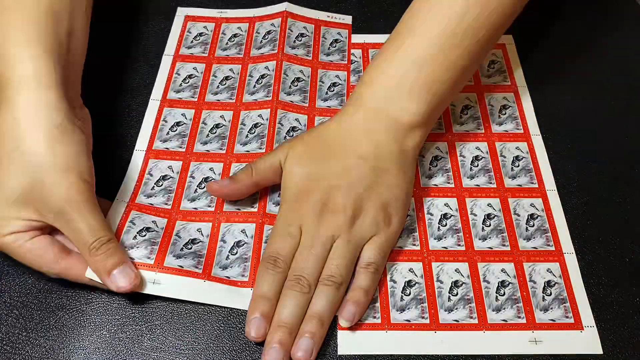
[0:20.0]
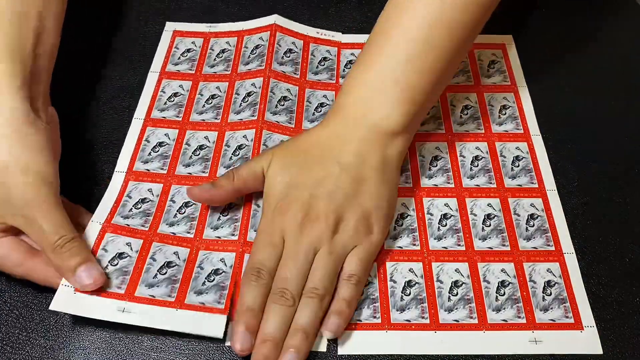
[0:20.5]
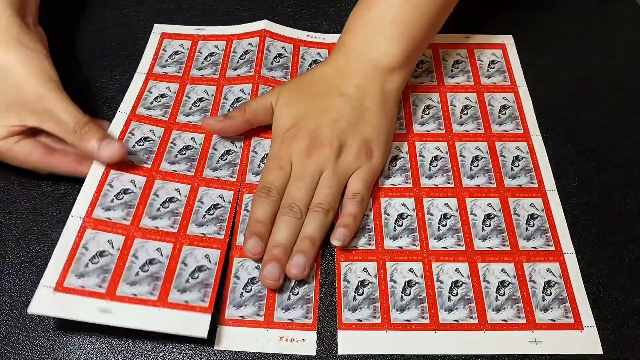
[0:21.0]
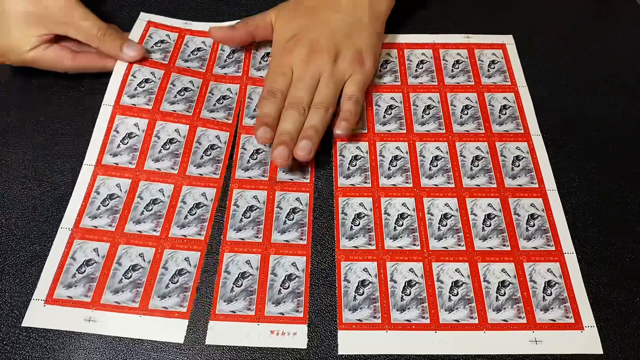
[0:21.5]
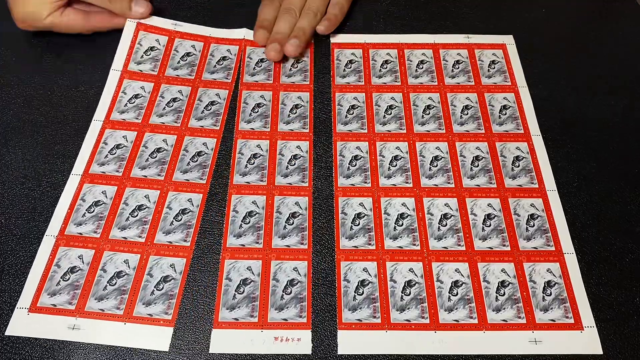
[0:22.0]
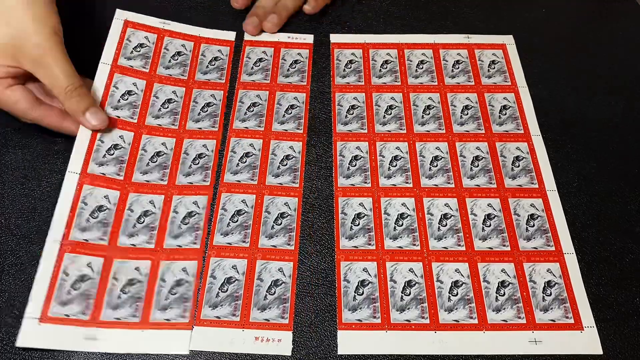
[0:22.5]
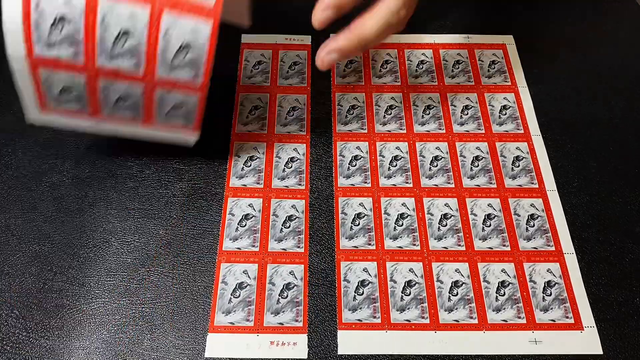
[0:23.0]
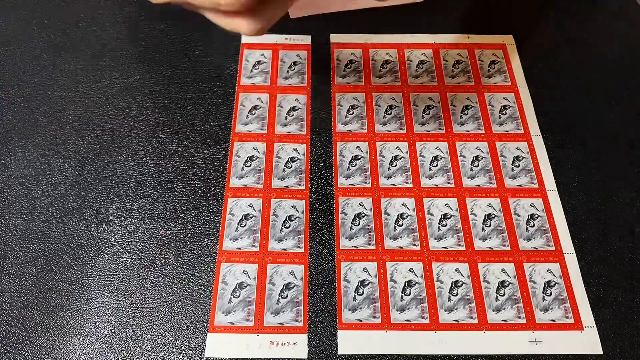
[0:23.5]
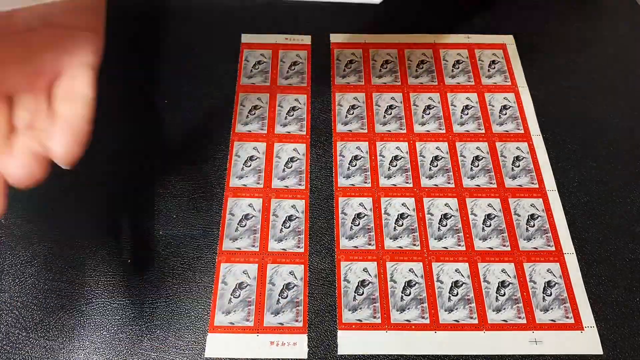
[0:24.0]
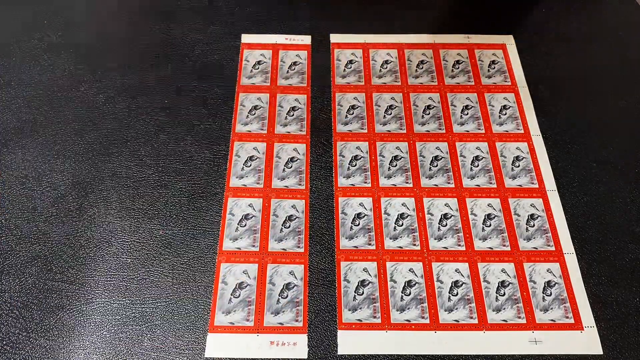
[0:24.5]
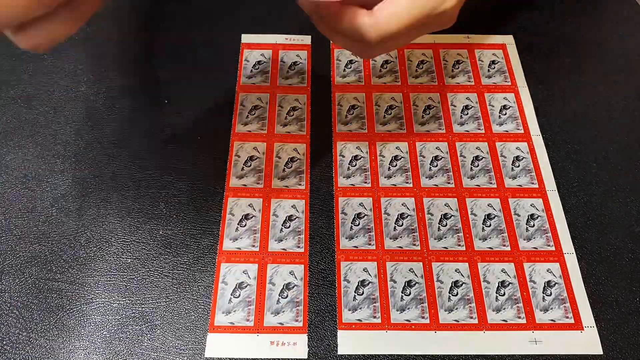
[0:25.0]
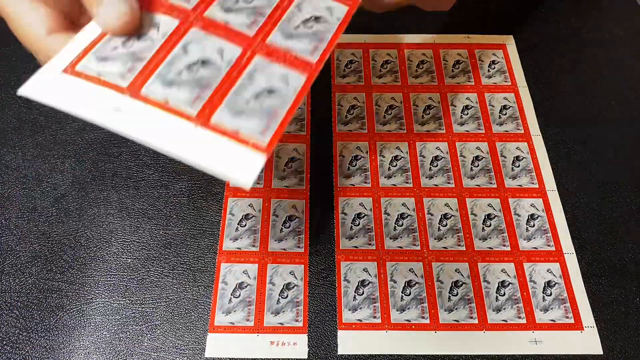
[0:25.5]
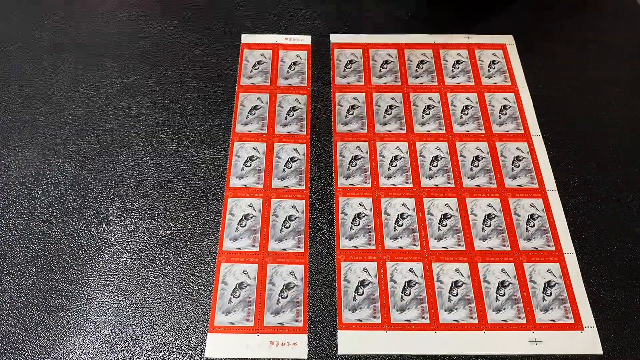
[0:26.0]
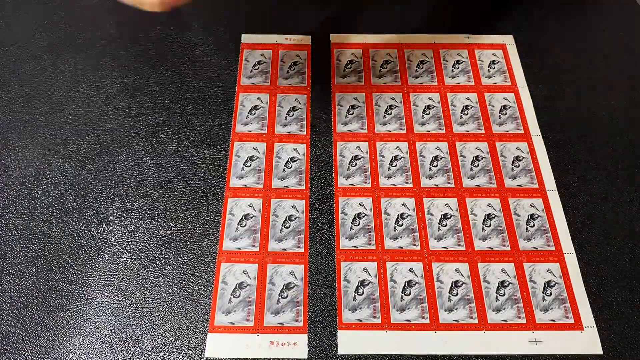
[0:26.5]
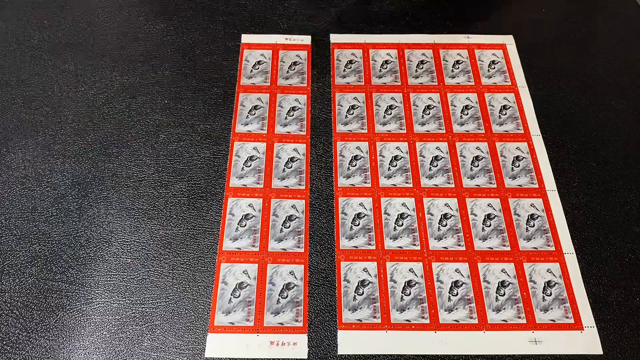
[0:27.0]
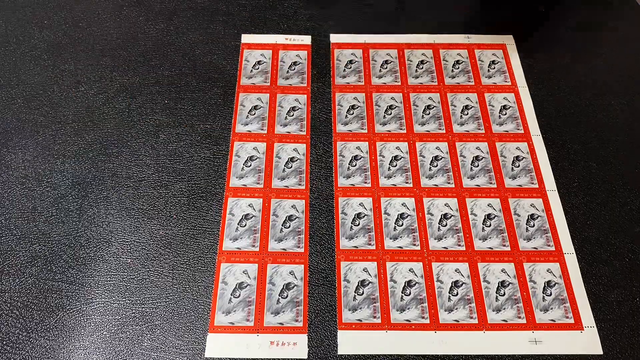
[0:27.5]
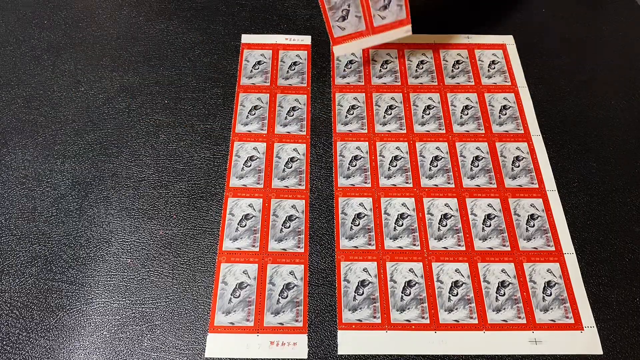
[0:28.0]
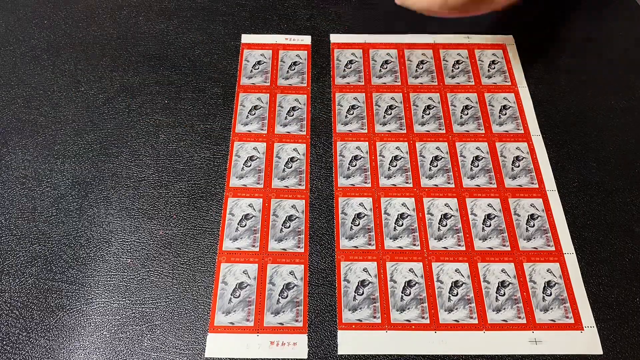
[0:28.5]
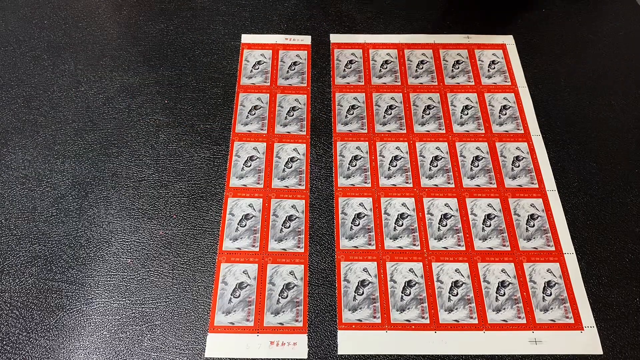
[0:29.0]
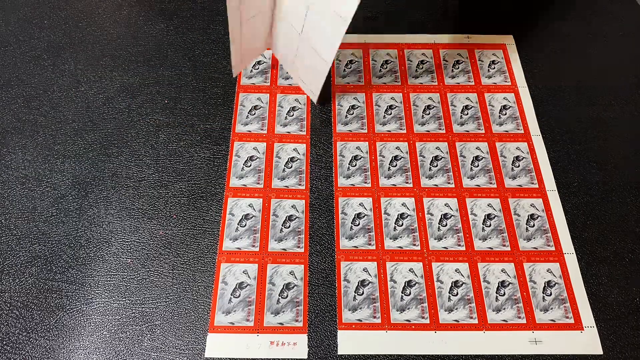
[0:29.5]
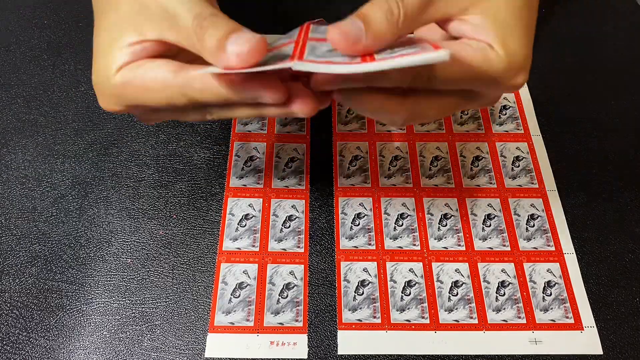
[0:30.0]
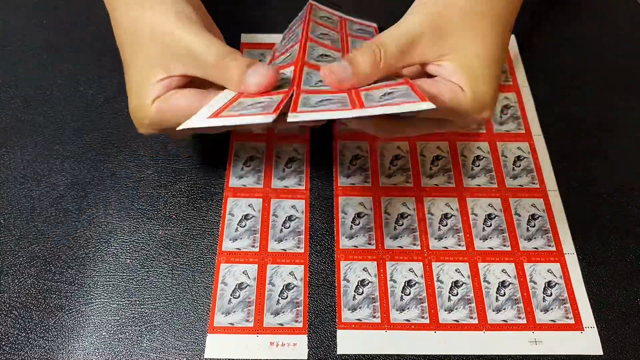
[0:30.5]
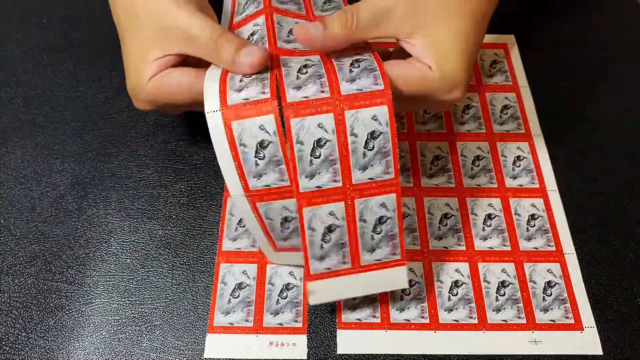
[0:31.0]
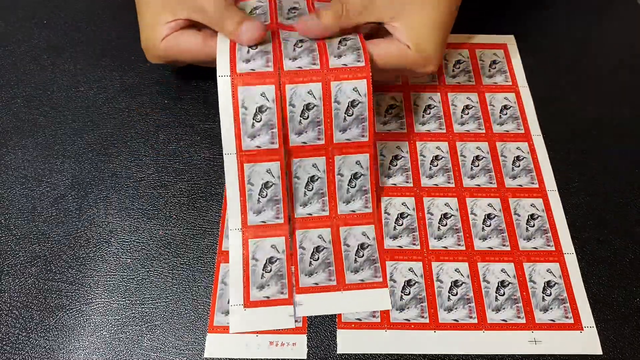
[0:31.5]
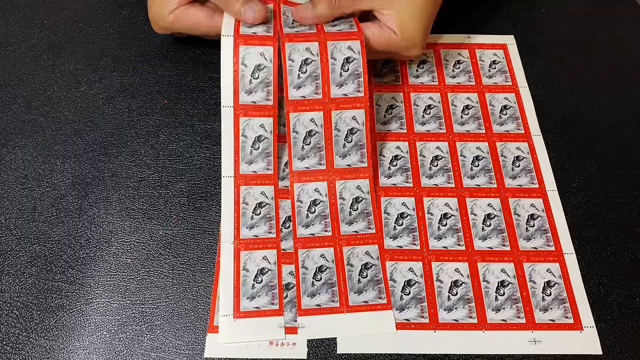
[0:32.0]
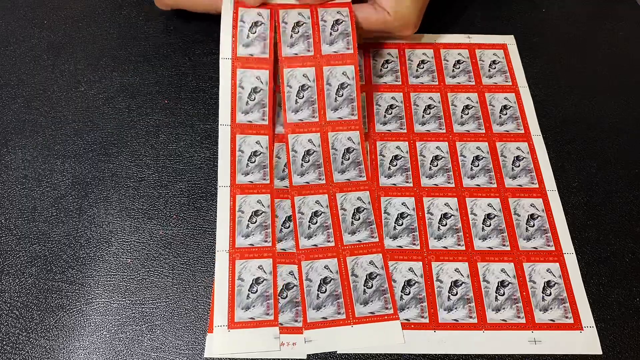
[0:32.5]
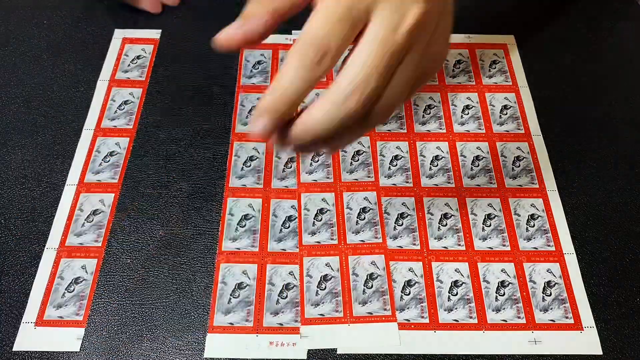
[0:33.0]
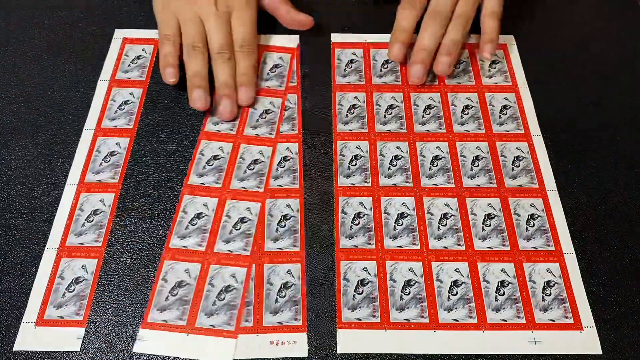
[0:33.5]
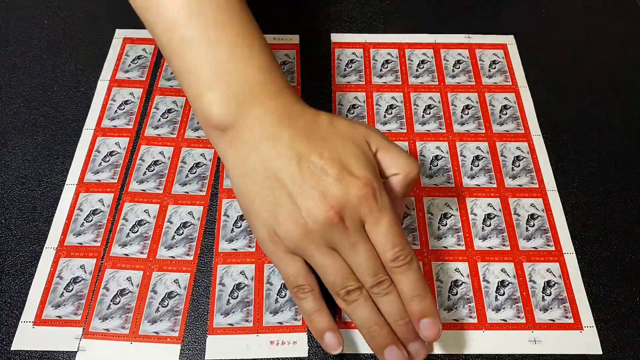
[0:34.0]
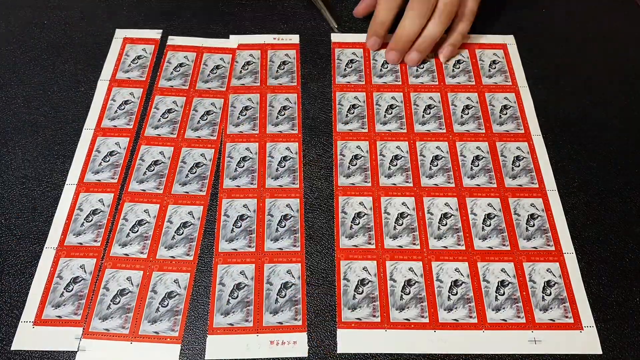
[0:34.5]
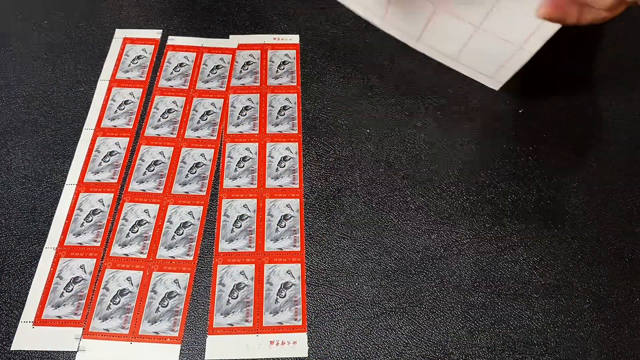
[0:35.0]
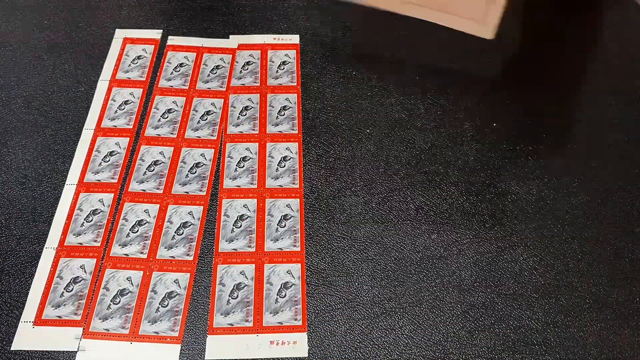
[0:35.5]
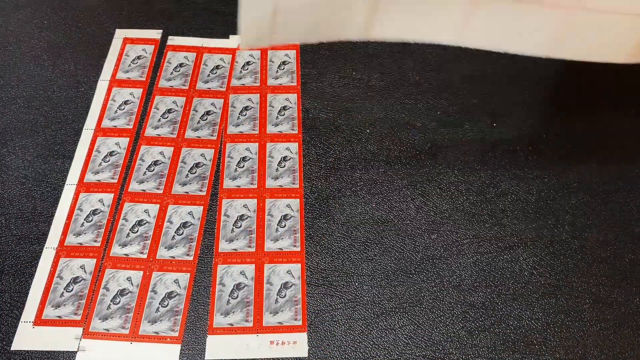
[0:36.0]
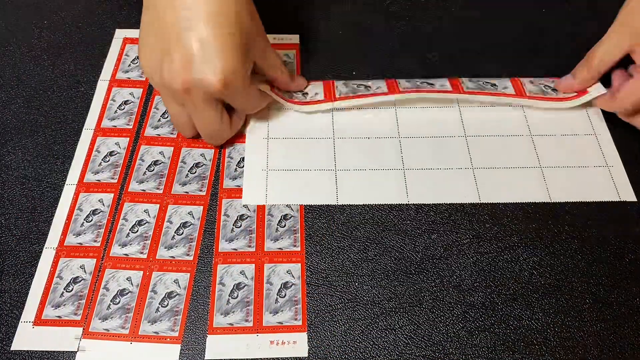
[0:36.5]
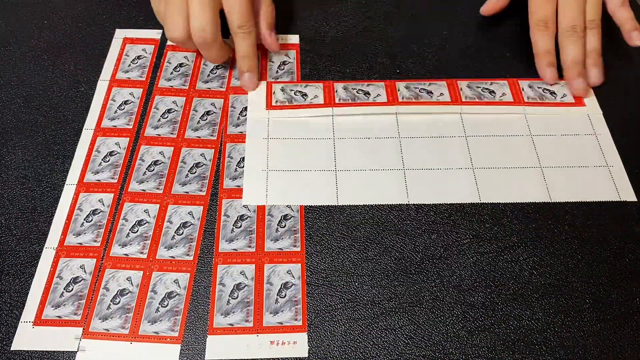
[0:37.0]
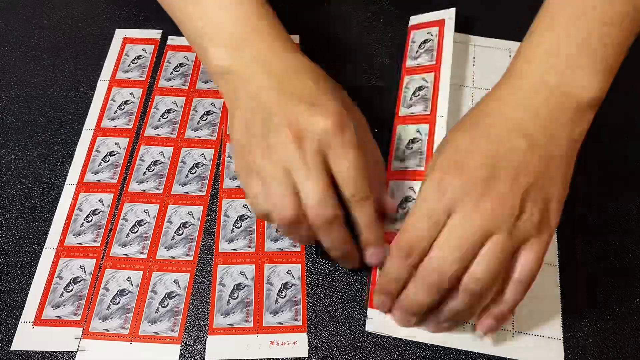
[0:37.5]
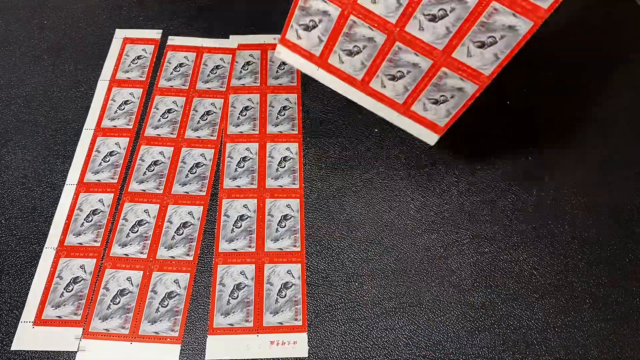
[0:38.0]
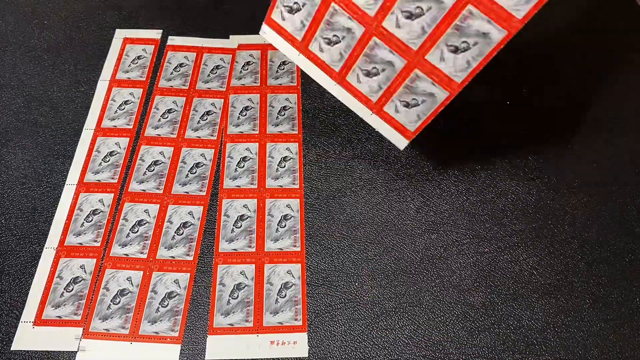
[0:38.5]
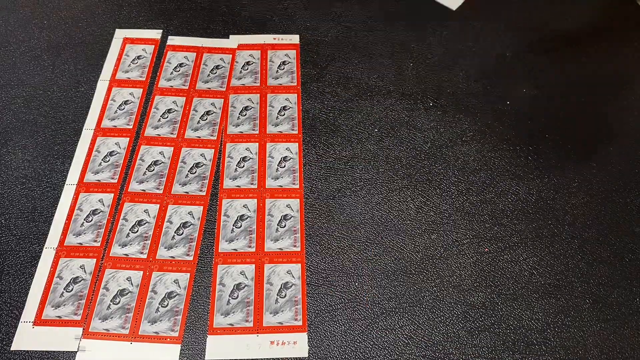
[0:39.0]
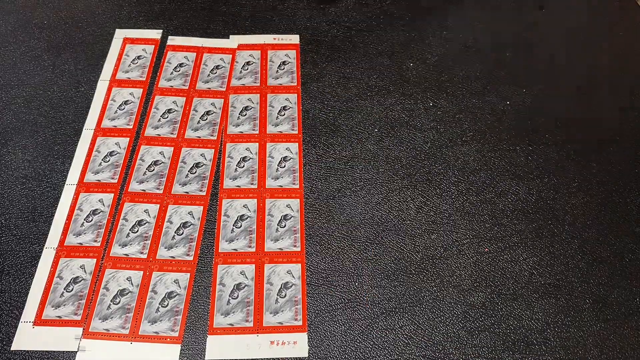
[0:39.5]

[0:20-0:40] He takes the half of the paper that he folded lengthwise, unfolds it, and uses his hands to apply tension and rip along the crease into two segments. This time they are not split equally: one side contains three sections and the other contains two. He continues ripping. He takes the bigger piece and folds it off camera, then rips it the same way, dividing it into a segment of two items and a segment of one item. He then takes the original big half of the paper, which still has five columns, and folds it so that it is in two portions, one a single column wide and the other four columns wide.